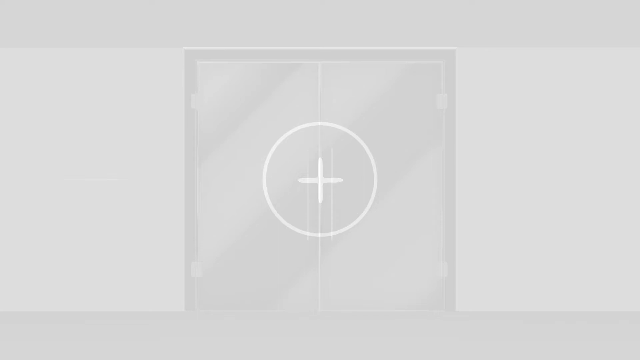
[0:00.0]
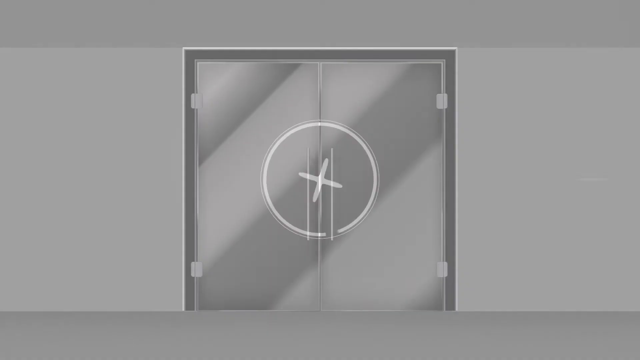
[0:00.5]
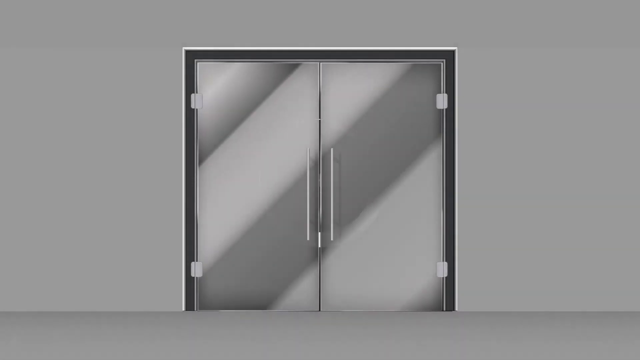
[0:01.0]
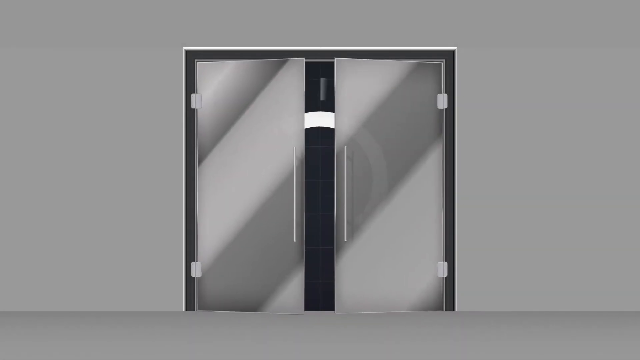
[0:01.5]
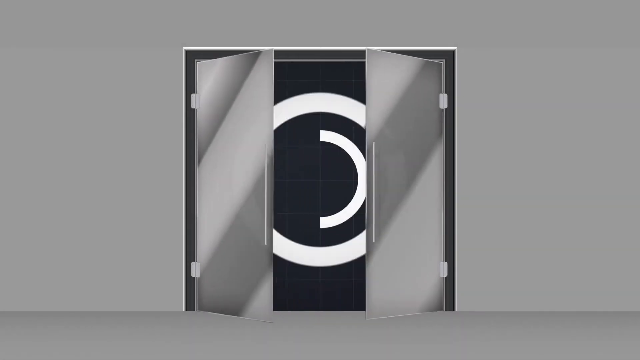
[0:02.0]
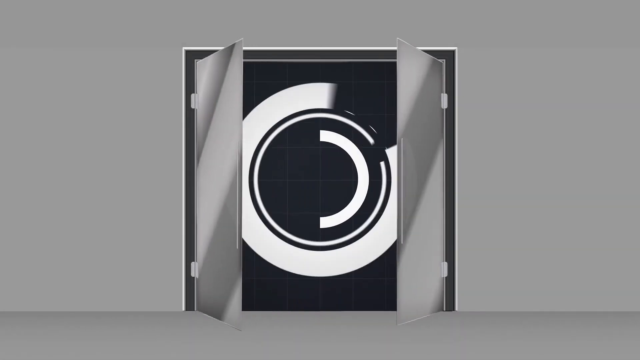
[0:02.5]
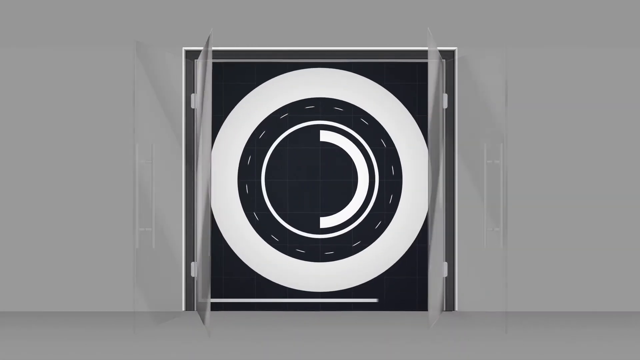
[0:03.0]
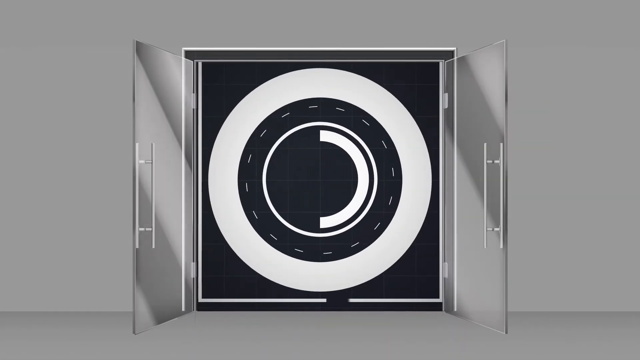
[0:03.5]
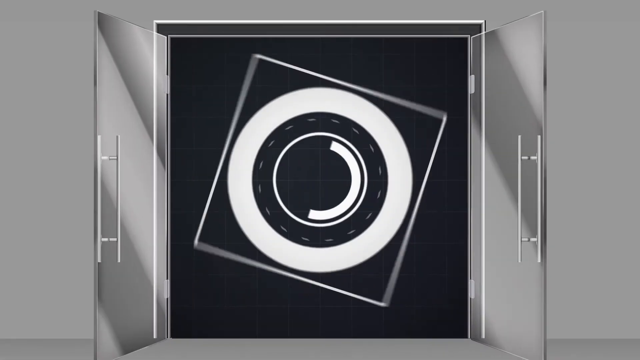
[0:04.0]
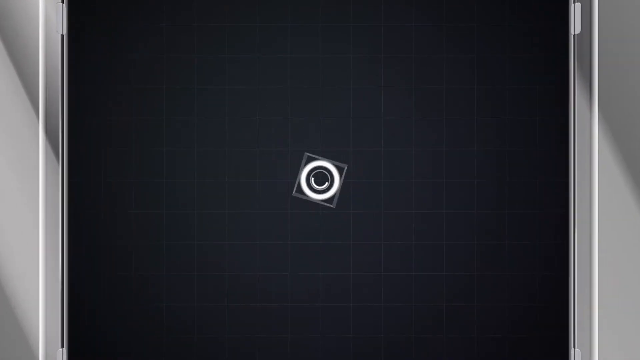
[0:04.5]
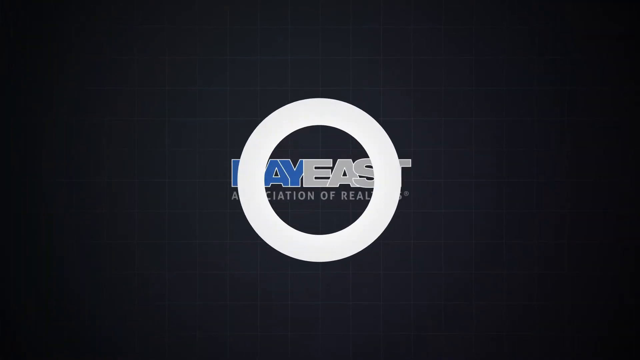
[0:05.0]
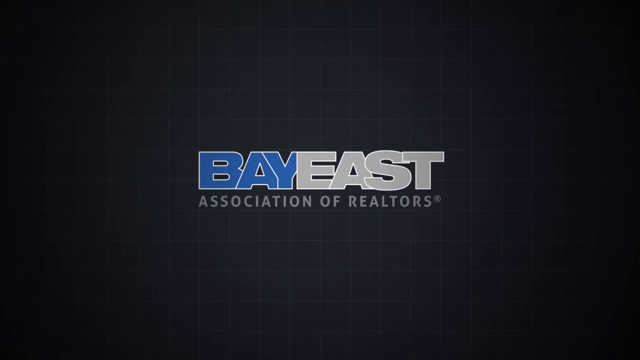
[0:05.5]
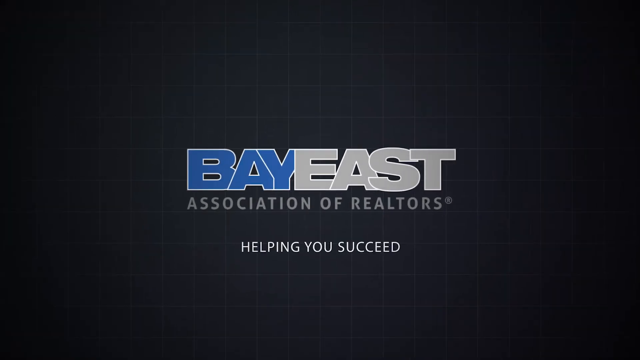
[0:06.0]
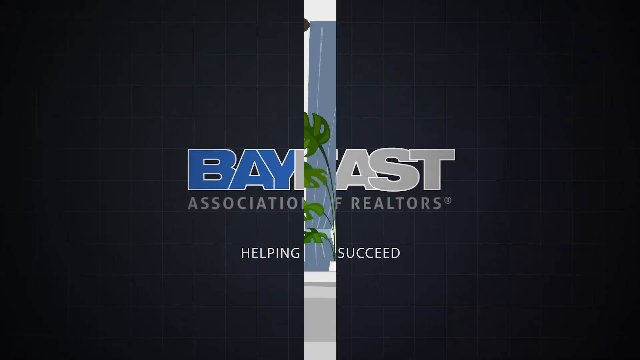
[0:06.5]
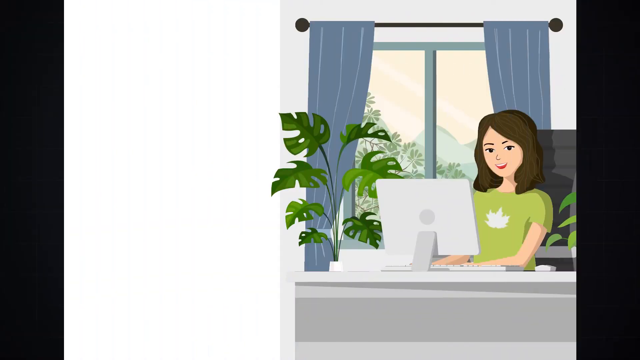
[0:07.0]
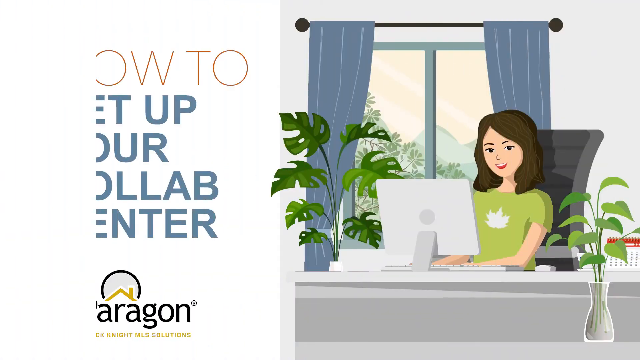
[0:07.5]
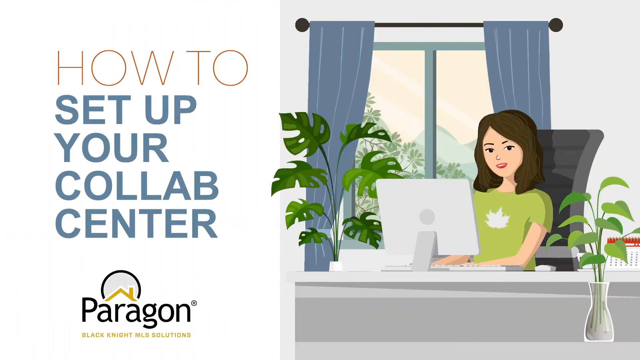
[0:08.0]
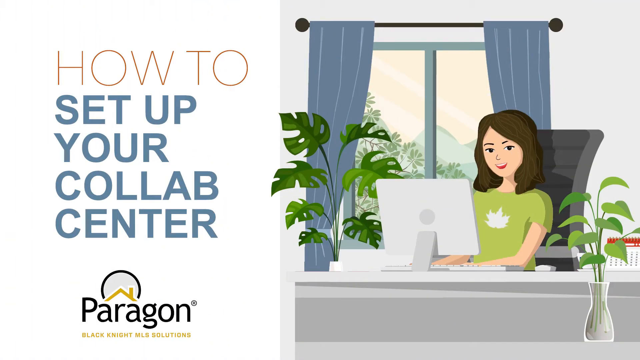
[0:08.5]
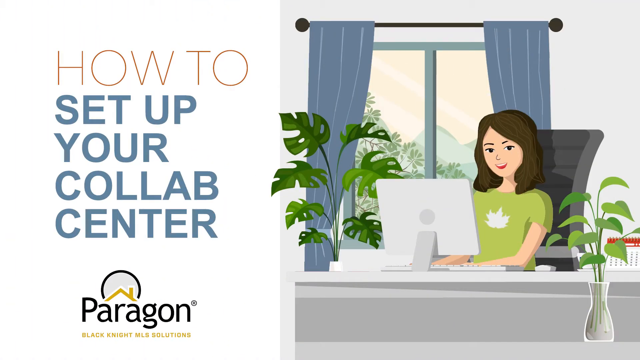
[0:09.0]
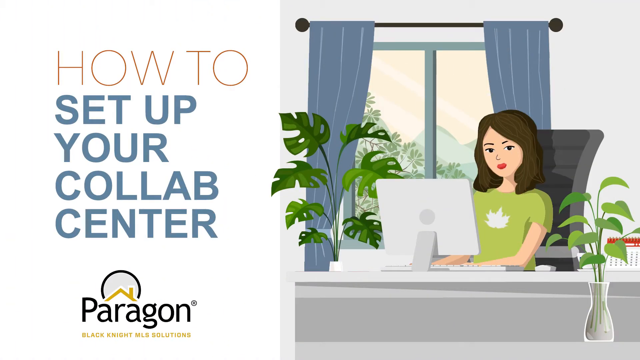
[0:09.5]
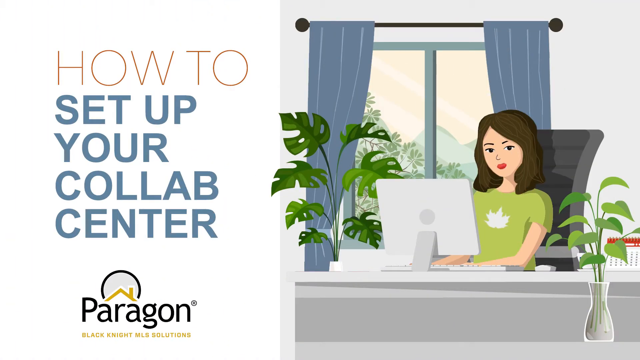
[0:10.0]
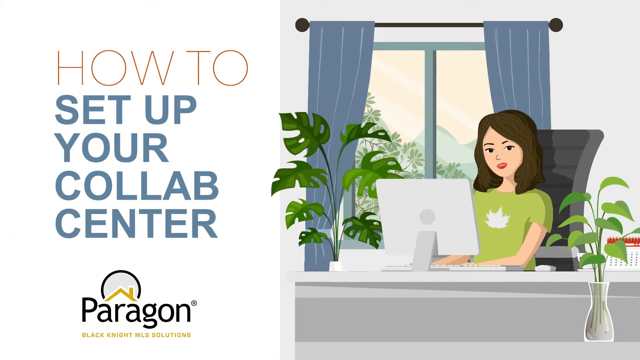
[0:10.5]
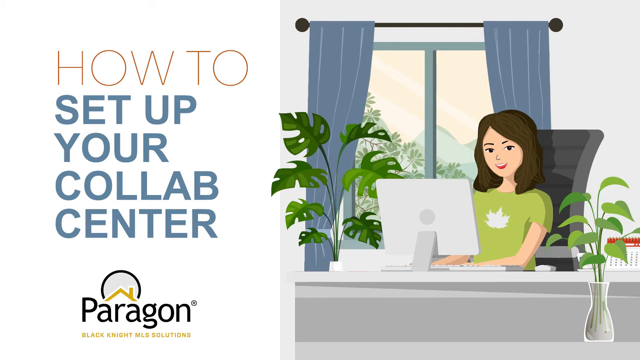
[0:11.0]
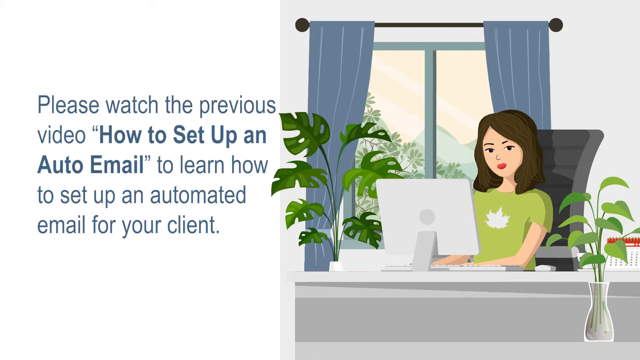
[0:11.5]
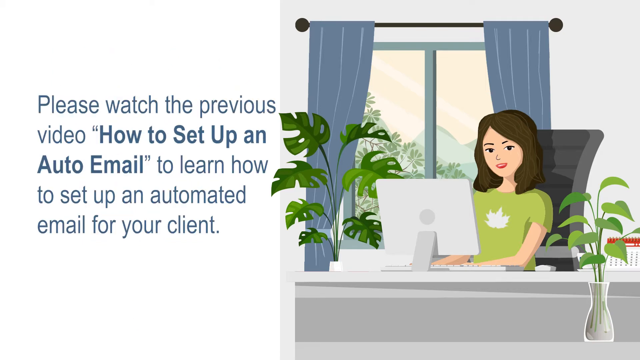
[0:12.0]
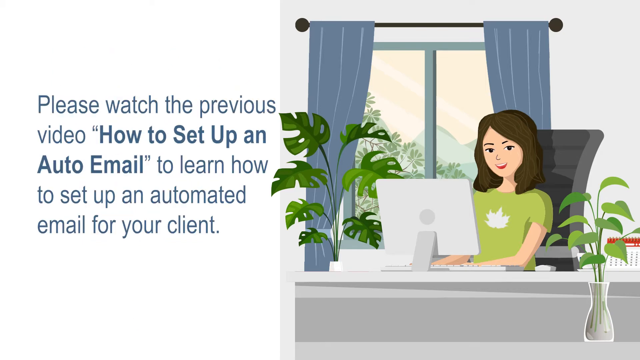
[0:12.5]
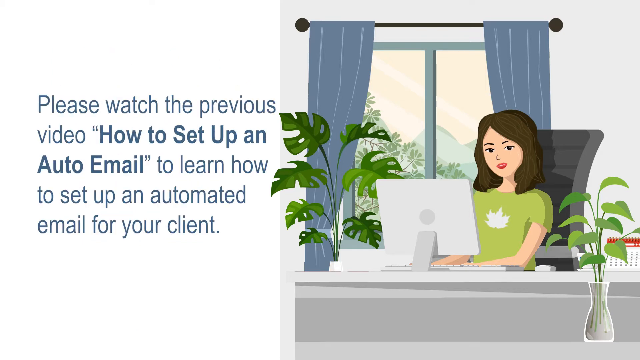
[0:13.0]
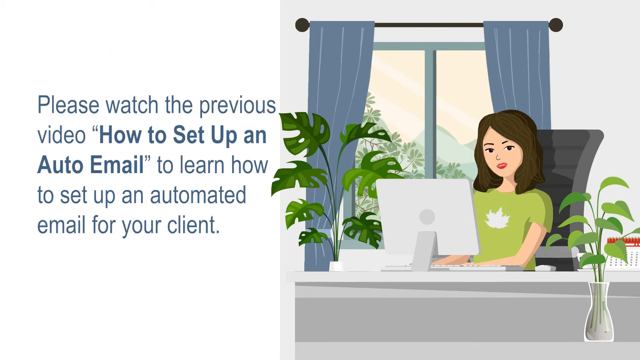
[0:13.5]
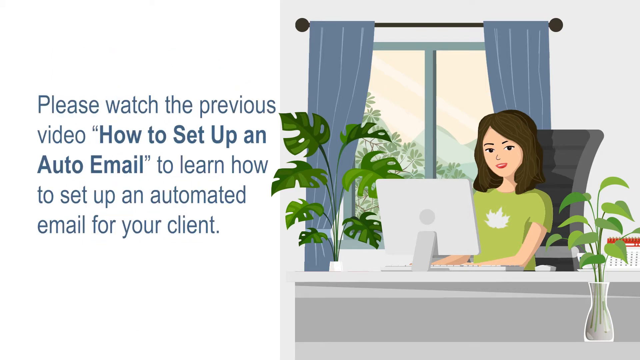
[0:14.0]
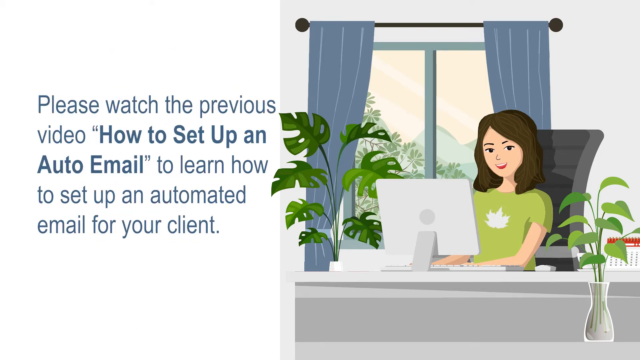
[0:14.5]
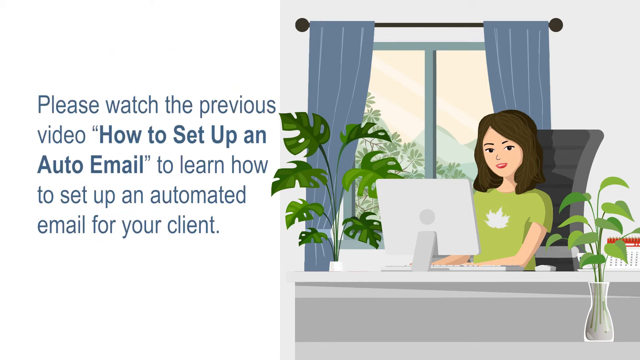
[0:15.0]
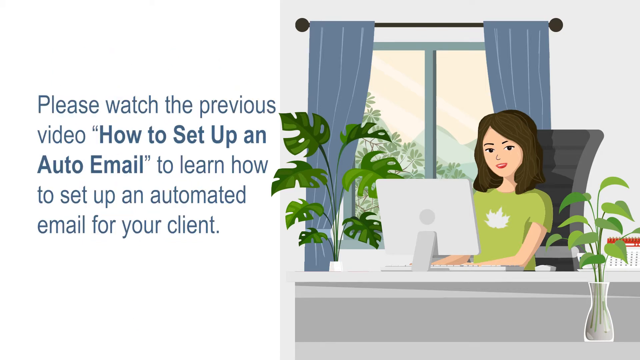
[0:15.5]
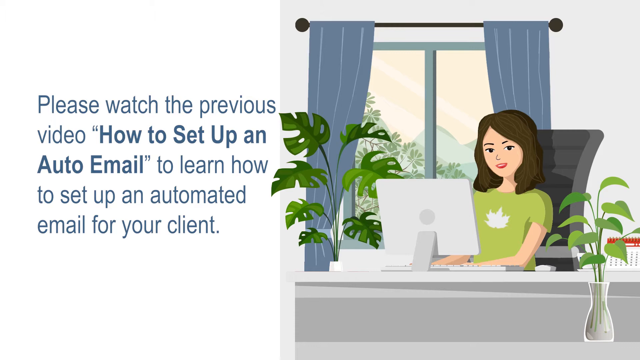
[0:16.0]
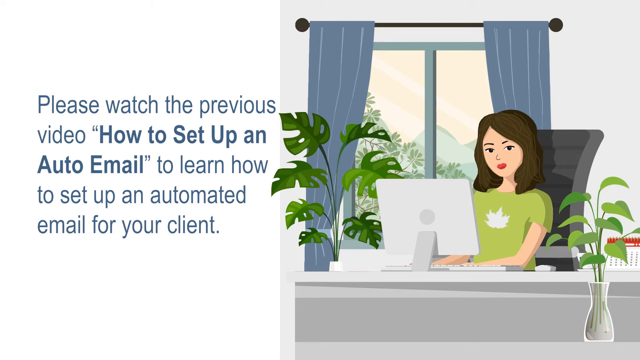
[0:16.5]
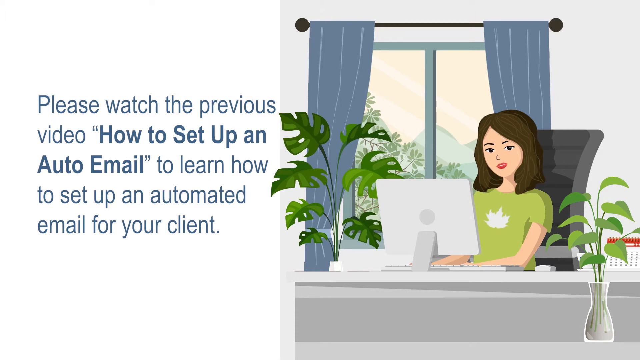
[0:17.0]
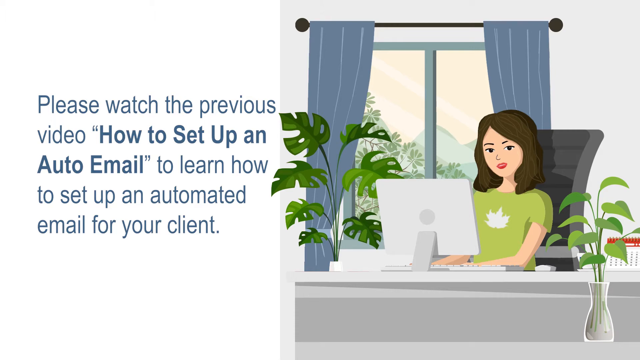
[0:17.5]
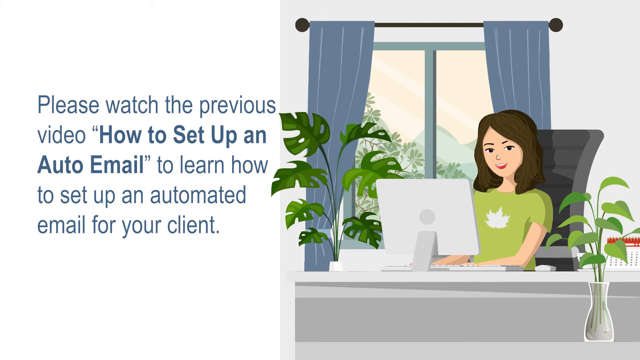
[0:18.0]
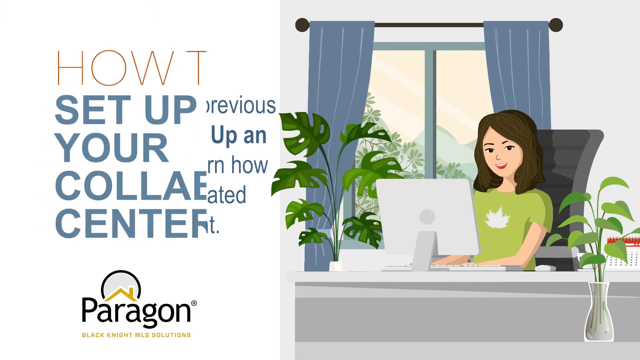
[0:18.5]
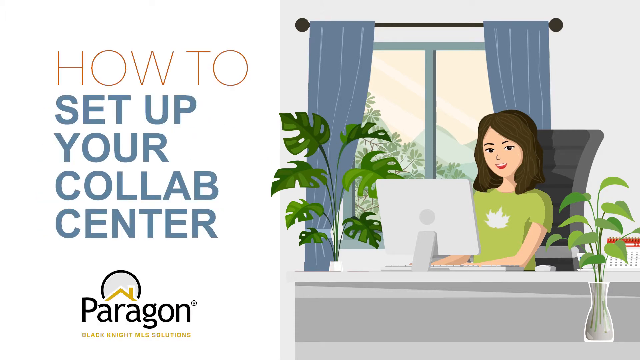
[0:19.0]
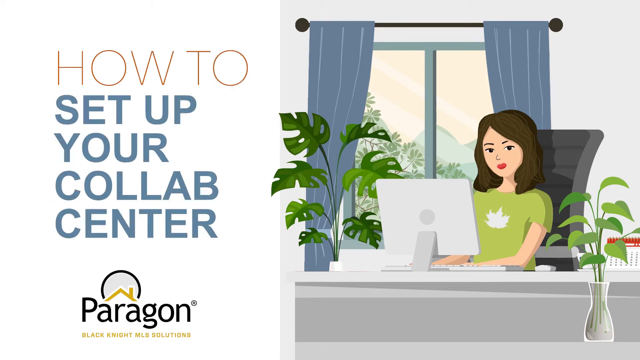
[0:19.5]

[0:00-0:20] A cartoon version of a lady sits at a desk in what looks like a computer chair, with a computer and monitor in front of her, typing on the keyboard. She has long brunette hair and wears a green shirt with a logo that looks like a leaf. She is in an office next to a window with blue curtains, with some plants around her. A caption reads "how to set up your co-lab center", apparently by Paragon. More text then appears: "please watch this previous video how to set up an auto email to learn how to set up an automated email for your client". The lady talks. The video appears to be an animated cartoon giving instructions on setting up the co-lab and an automated email for a client.